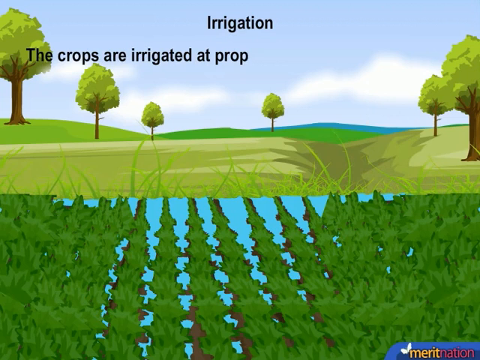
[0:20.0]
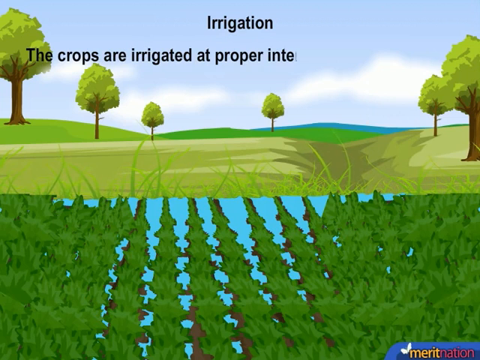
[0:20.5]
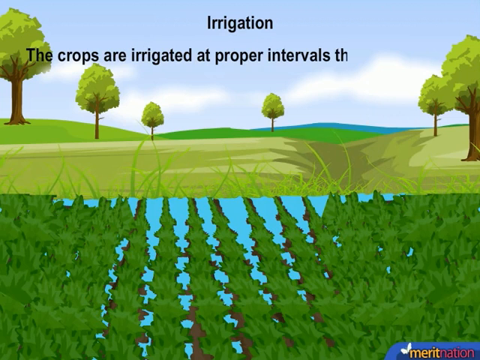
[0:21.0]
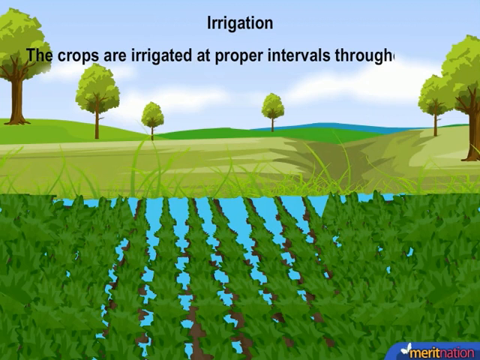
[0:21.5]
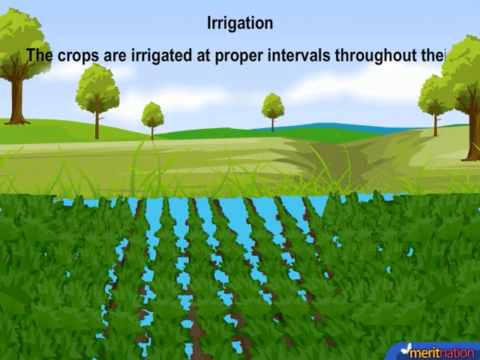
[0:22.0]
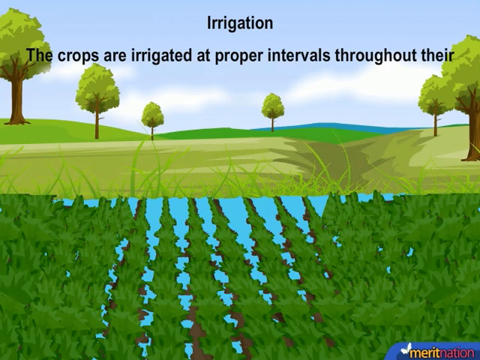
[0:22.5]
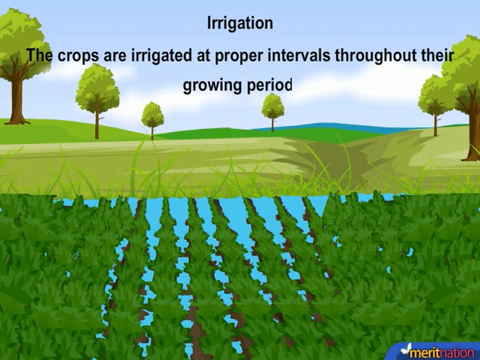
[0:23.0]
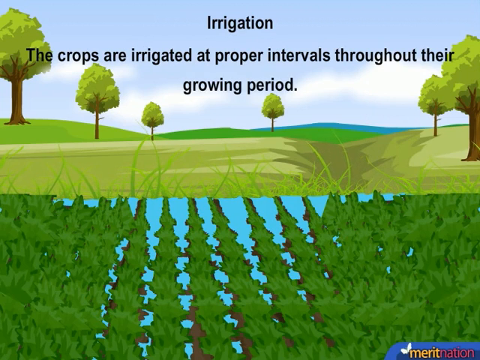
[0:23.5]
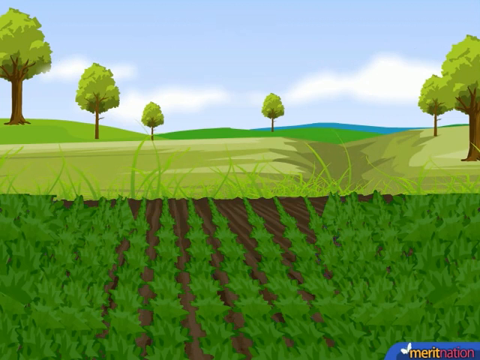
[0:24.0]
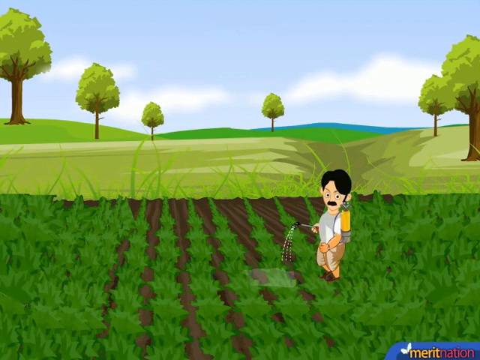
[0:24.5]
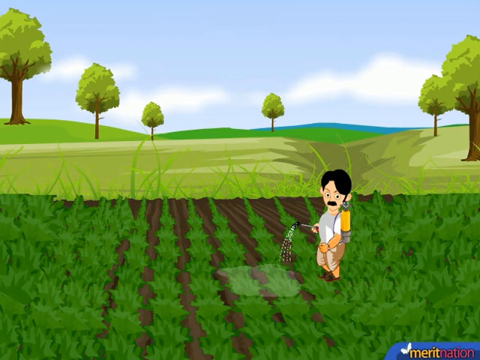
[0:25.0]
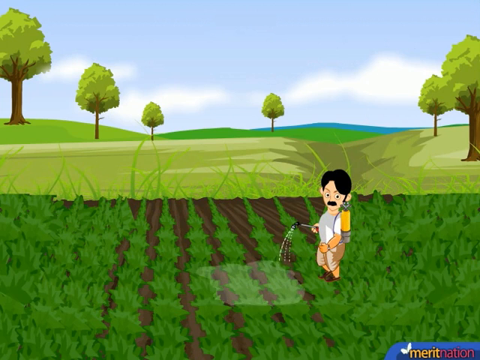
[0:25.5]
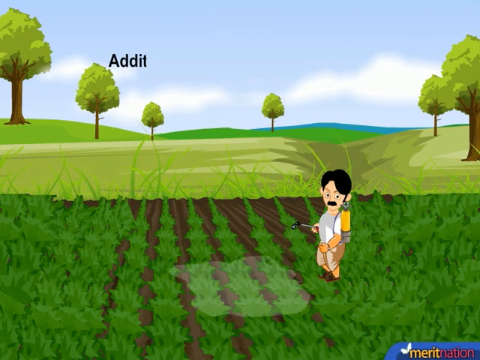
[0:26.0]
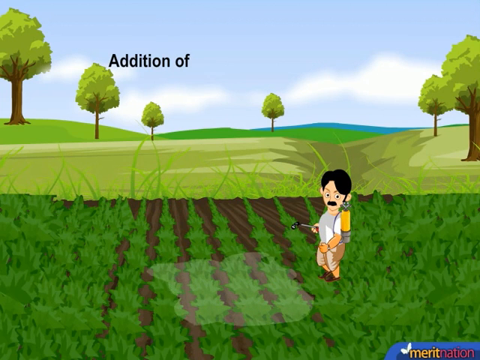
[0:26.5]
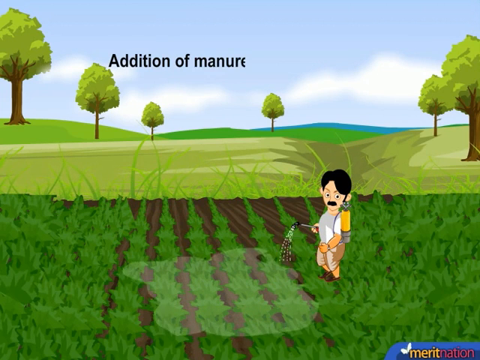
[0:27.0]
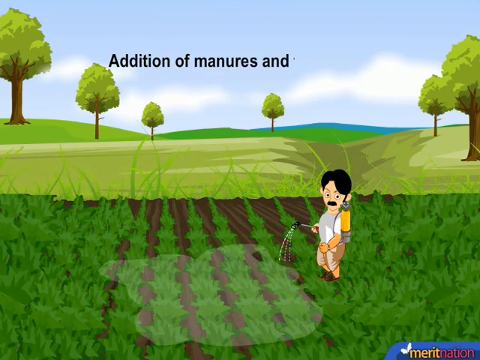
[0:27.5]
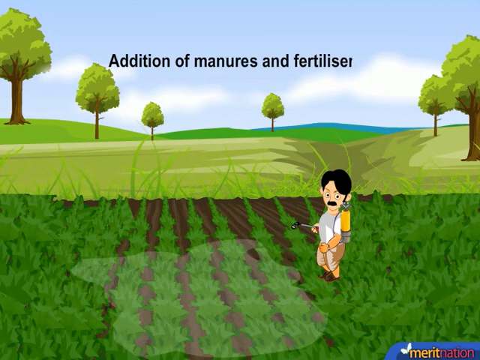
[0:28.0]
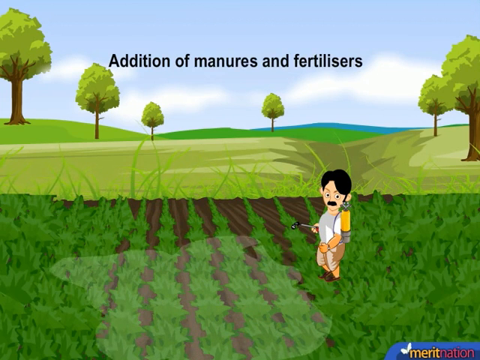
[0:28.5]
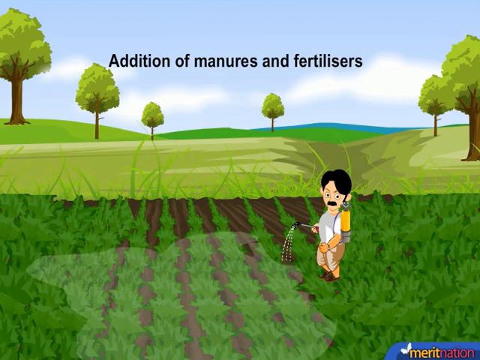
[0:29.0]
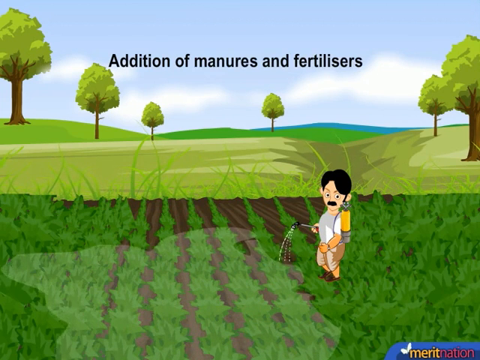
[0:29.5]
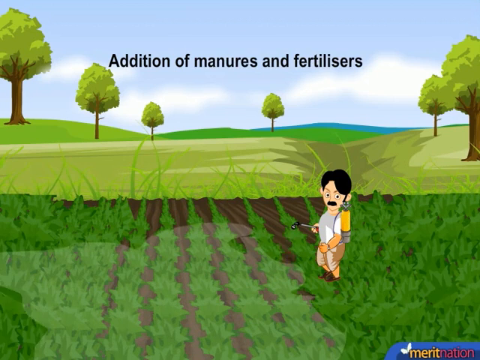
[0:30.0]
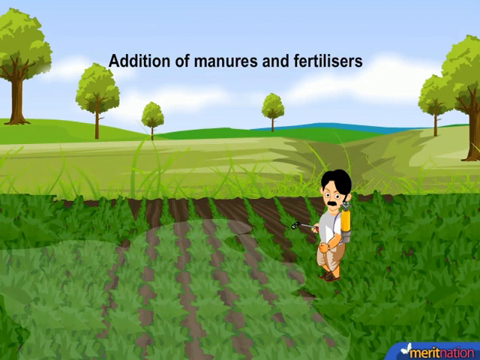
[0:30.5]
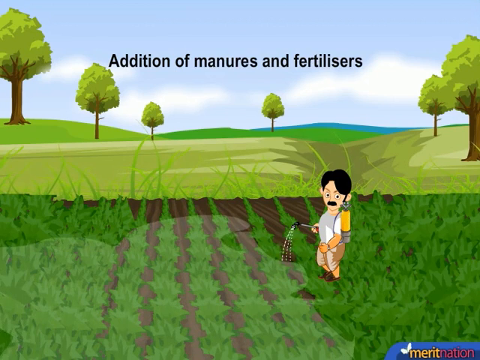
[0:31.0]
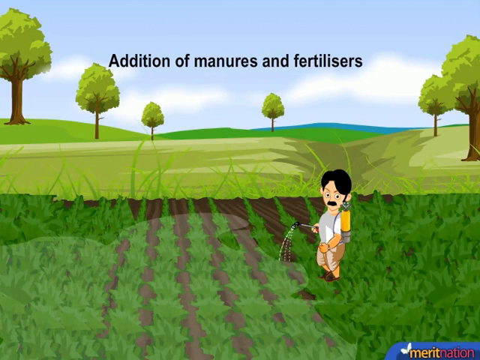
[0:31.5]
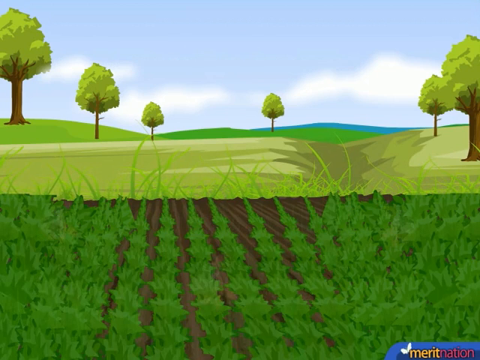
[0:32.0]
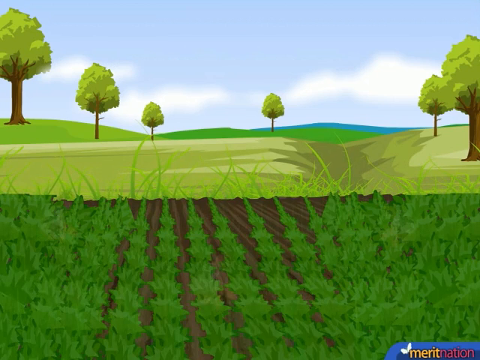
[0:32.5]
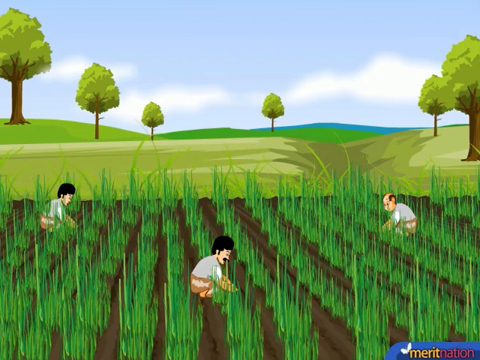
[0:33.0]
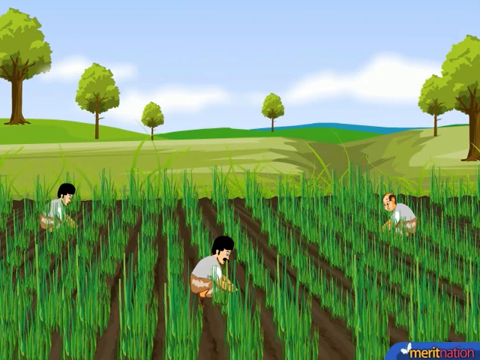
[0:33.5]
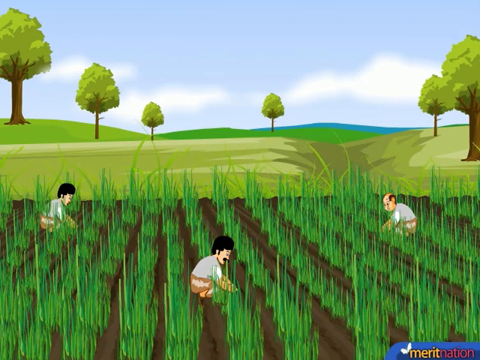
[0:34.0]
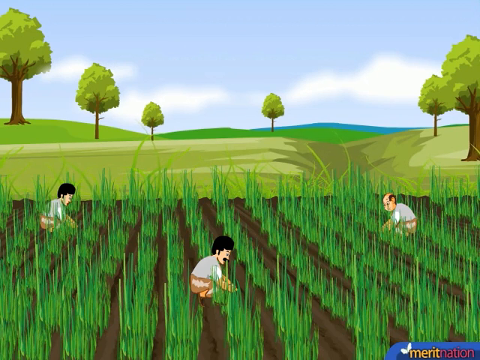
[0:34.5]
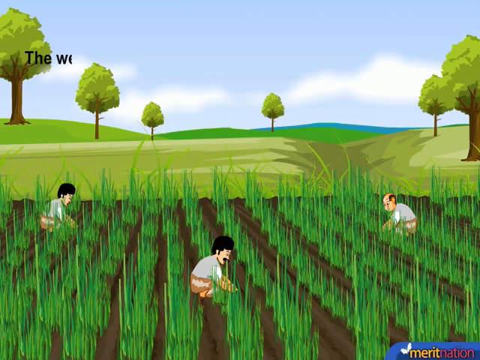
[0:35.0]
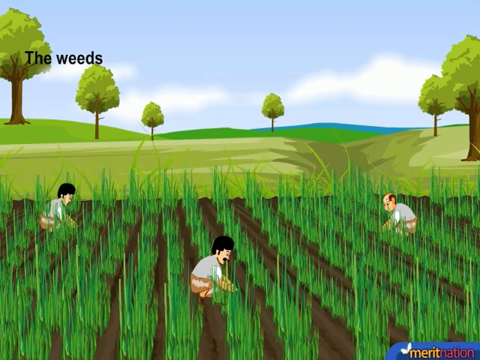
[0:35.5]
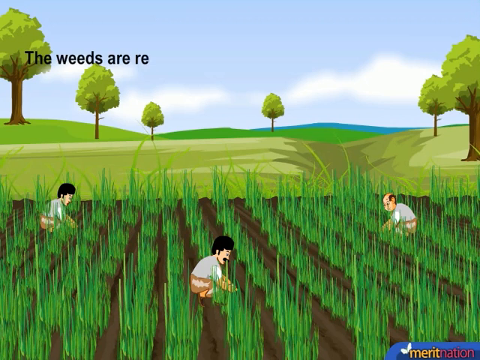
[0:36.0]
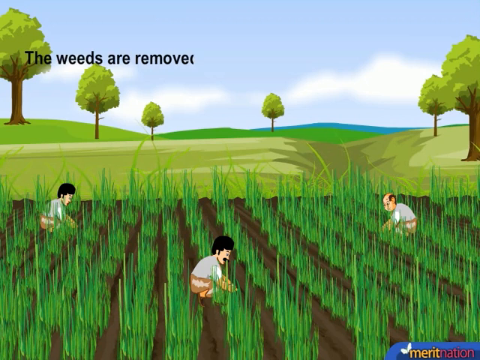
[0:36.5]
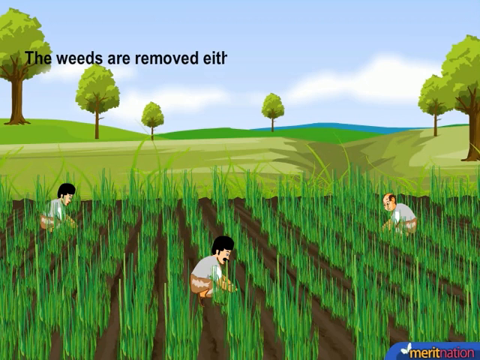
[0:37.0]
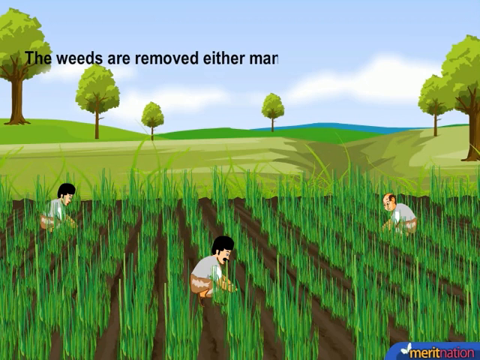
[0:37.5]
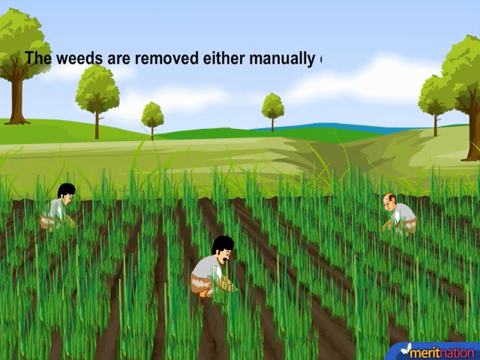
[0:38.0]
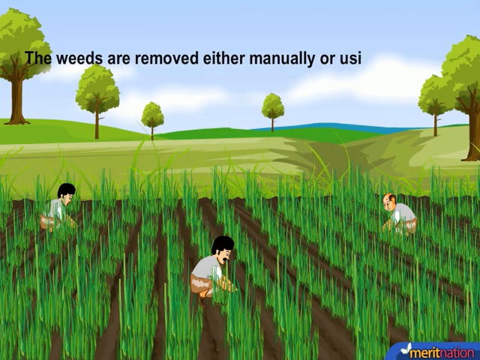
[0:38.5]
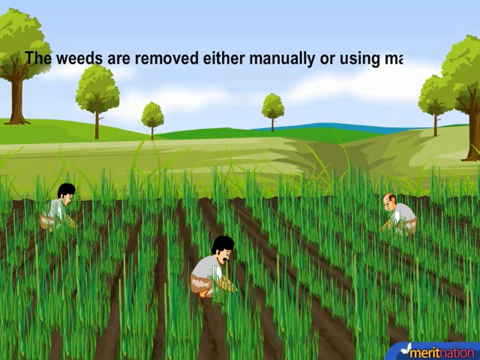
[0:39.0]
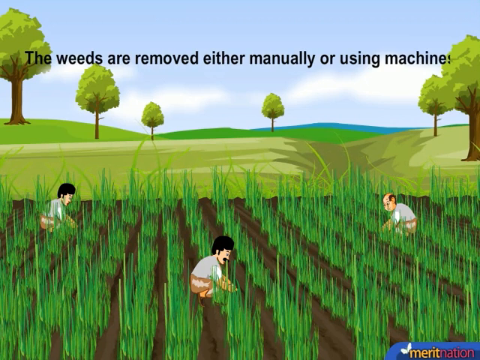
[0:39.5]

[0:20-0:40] The segment starts with tips for doing irrigation. The cartoon animated character stands in the field watering the plants. Three people are in a field of crops; the men appear to be bent down doing something with the plants. The man watering the plants has a yellow bottle on his back that he uses for the irrigation. Light blue lines in the irrigated field indicate where the water has been put on the crops. In the far background is a blue hilly landscape that could possibly be water. The colors are a vivid green, blue and white, with shades of tan that look like dirt.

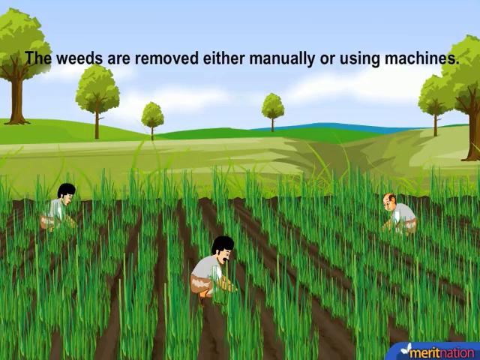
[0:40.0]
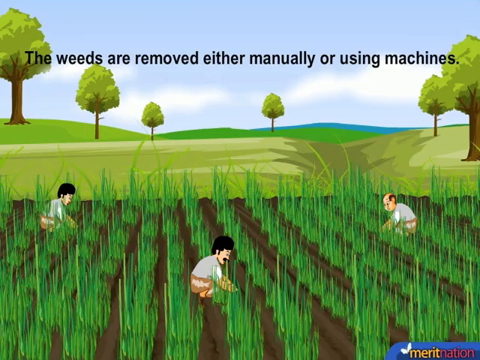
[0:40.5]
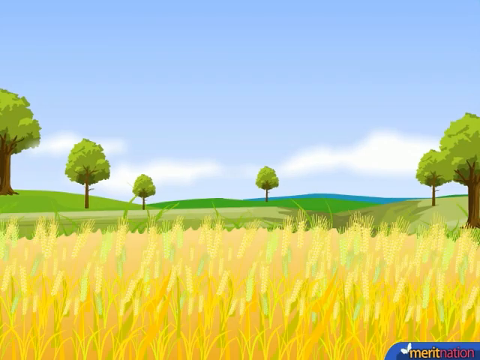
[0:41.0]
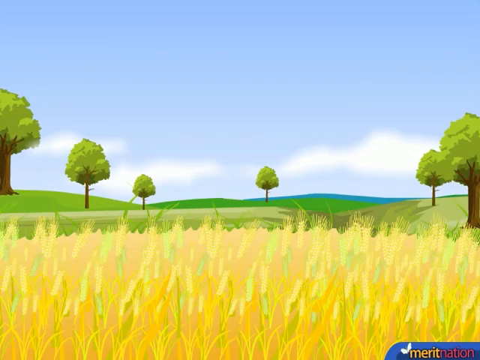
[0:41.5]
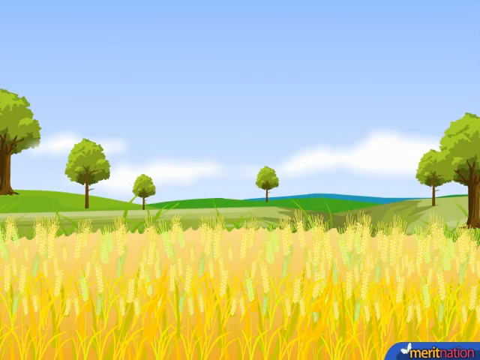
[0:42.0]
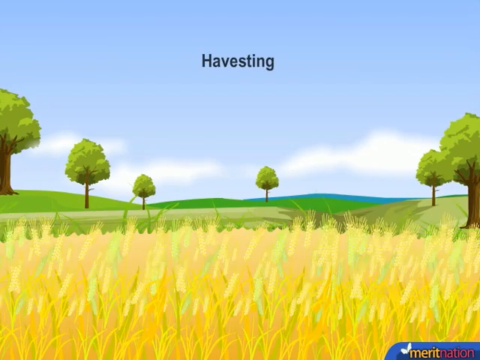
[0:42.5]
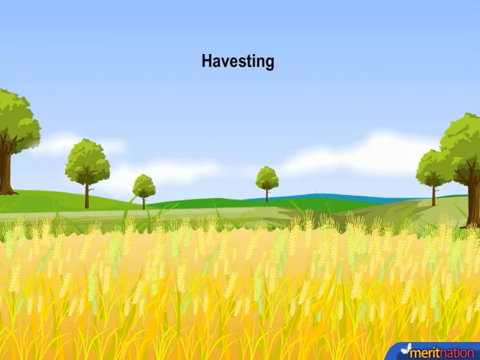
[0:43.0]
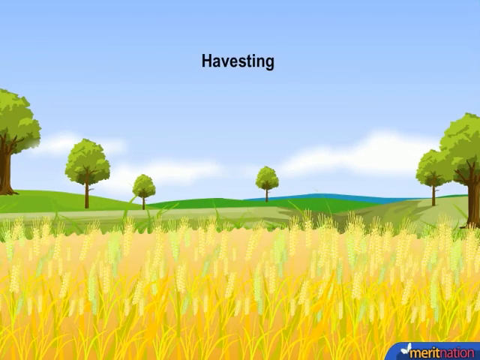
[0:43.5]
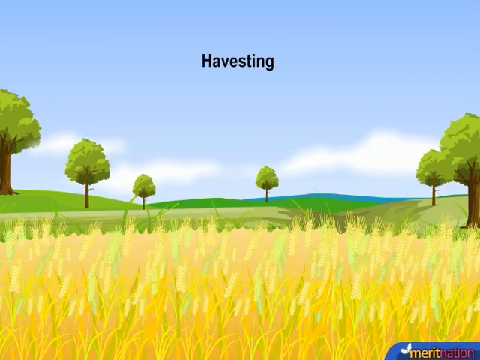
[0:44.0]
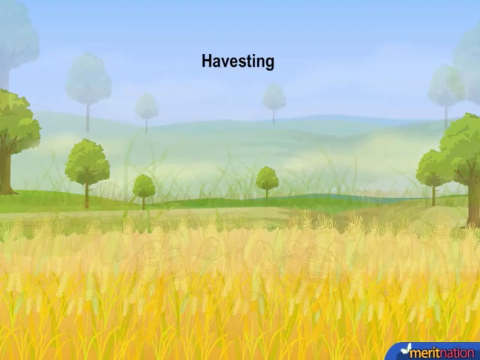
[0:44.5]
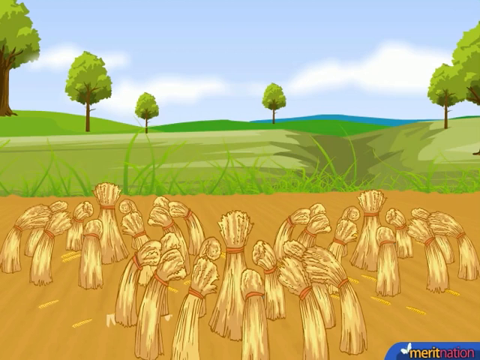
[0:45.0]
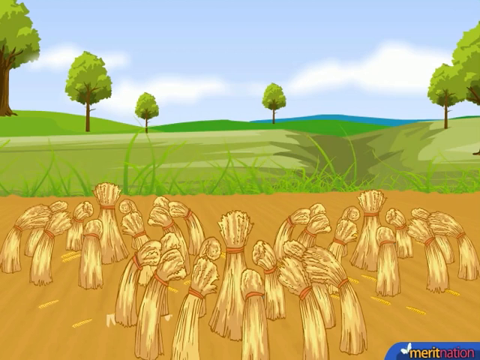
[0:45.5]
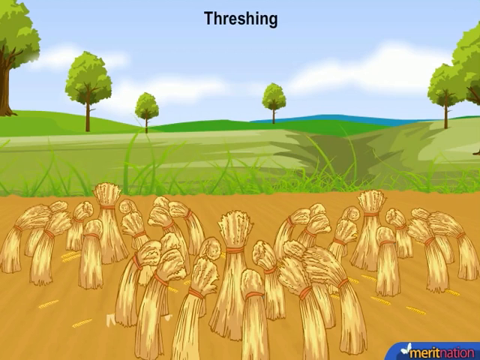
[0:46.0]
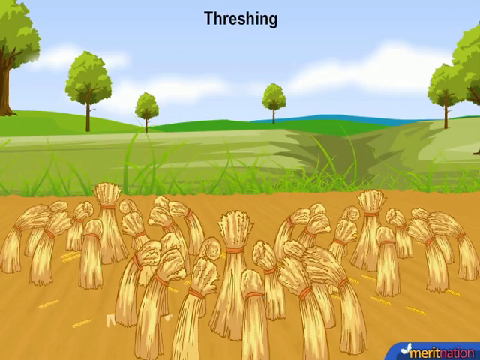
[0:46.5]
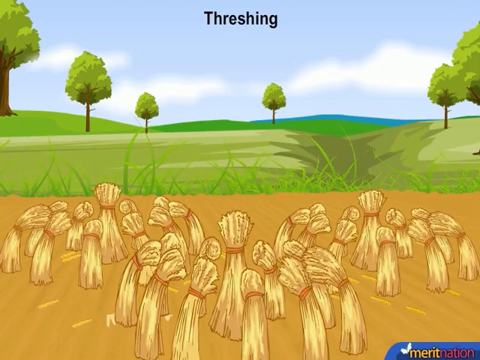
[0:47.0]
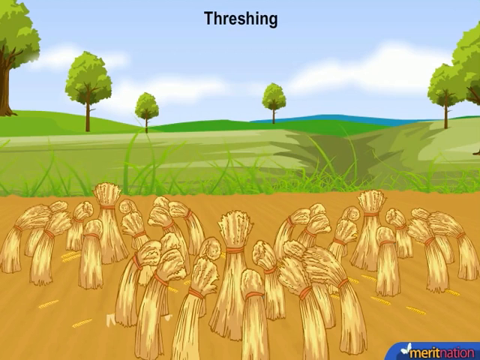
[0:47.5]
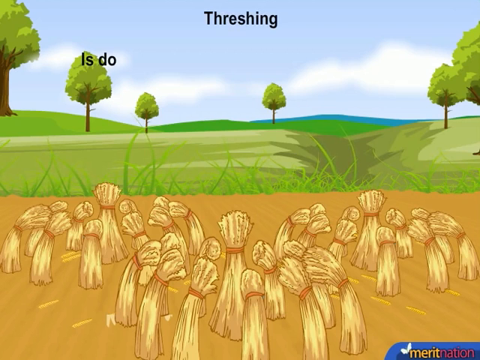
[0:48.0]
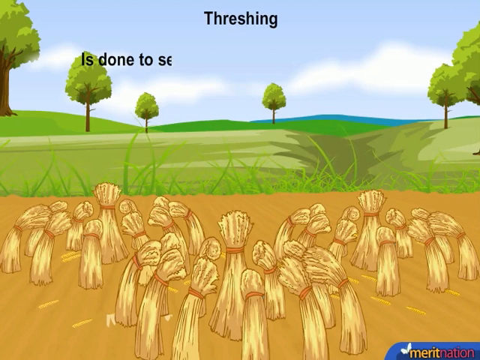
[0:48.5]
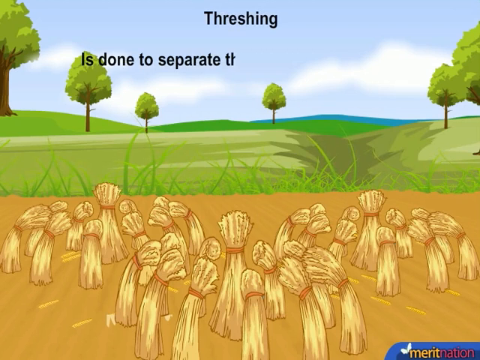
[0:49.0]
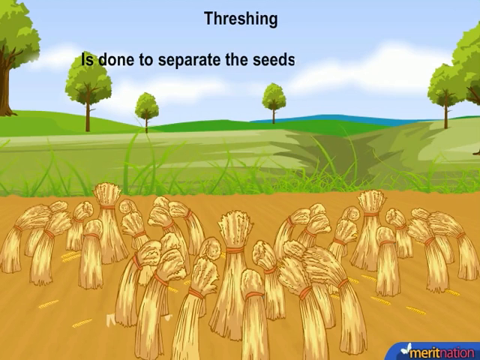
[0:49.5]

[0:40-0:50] Text at the start says "Harvesting." Yellow crops appear at the bottom of the screen, and the view flashes to what looks like stalks of possibly corn. The plants at the start look like they have cattails on top of them, and the animation makes these crops move back and forth in the wind. The scene then switches to a landscape with no grass, just what looks like dirt. Text says "the weeds are removed either manually or using machines." Six trees are in the landscape. Stalks at the bottom of the screen are done in a bright yellow. The bottom right-hand corner of the screen says "Merit Nation." It looks like it may be a corn field.